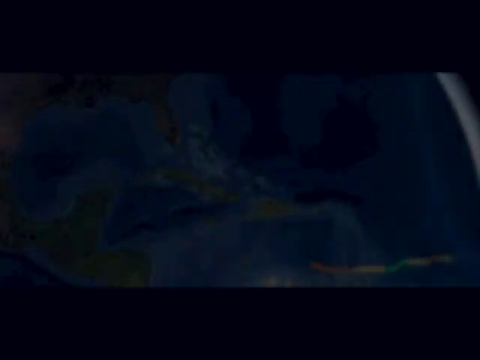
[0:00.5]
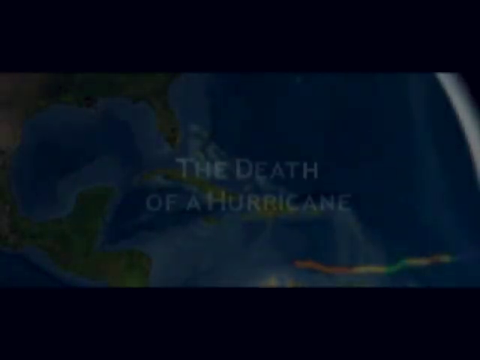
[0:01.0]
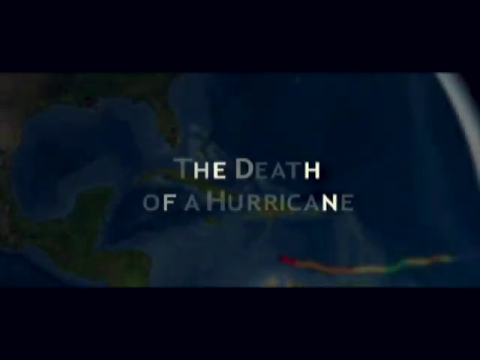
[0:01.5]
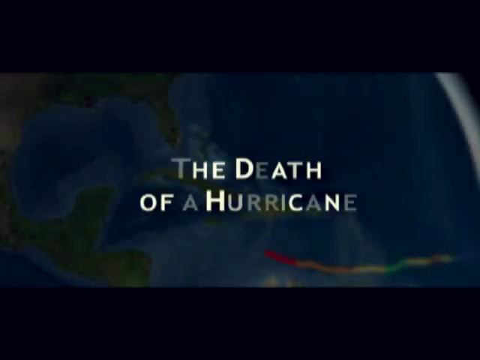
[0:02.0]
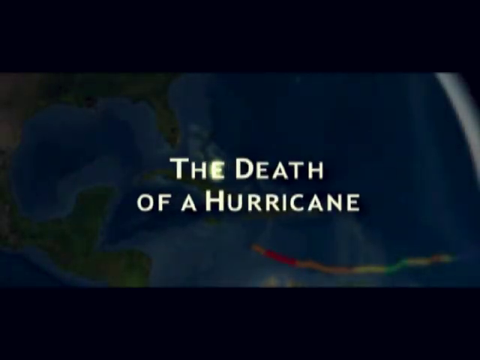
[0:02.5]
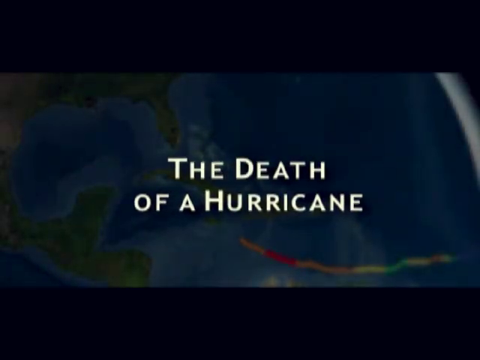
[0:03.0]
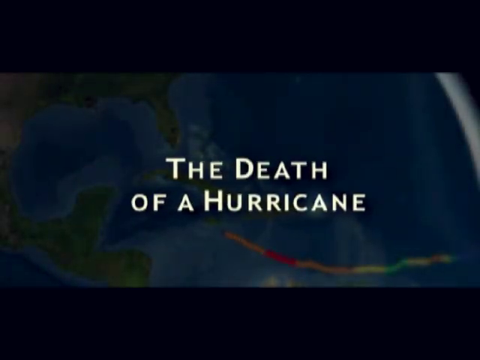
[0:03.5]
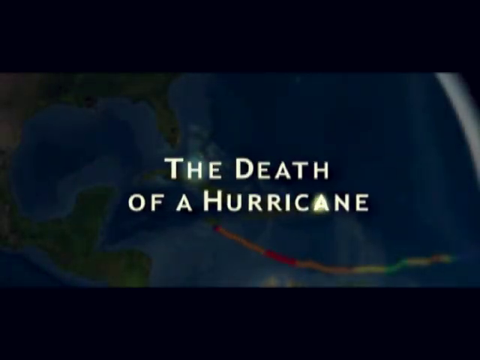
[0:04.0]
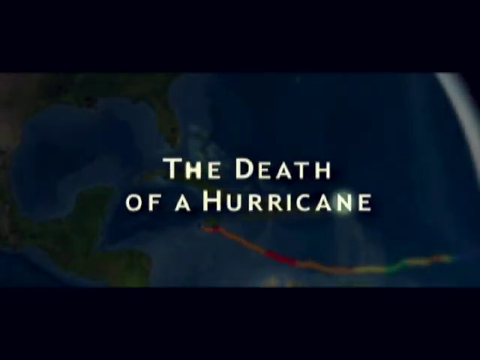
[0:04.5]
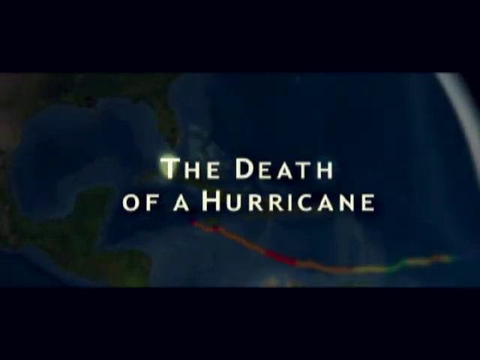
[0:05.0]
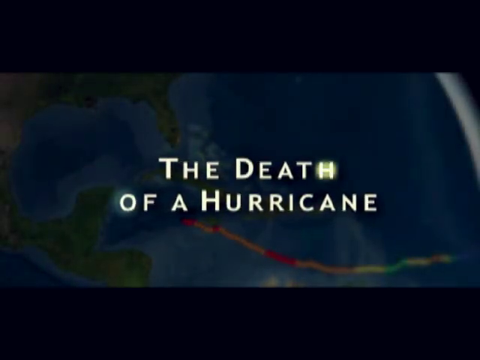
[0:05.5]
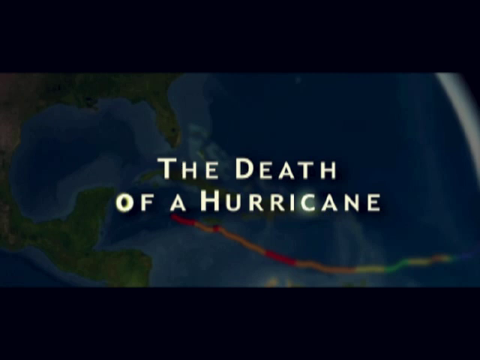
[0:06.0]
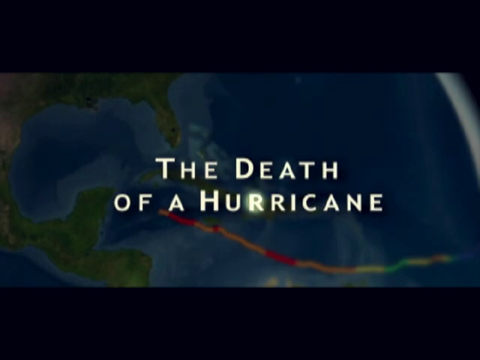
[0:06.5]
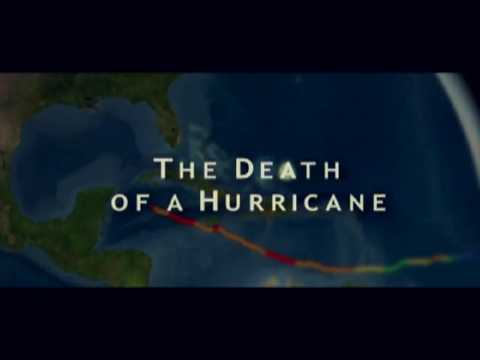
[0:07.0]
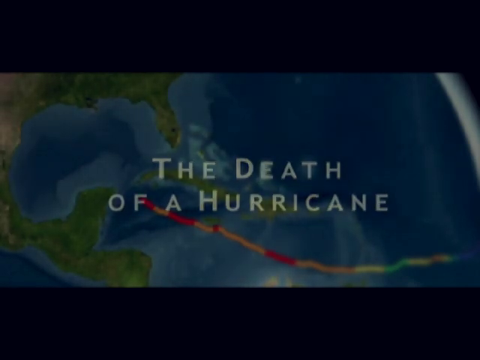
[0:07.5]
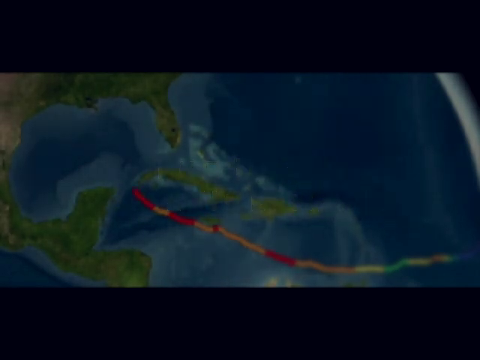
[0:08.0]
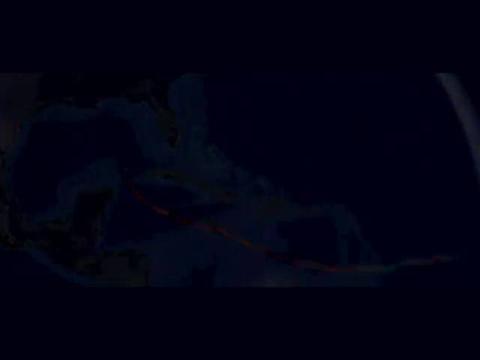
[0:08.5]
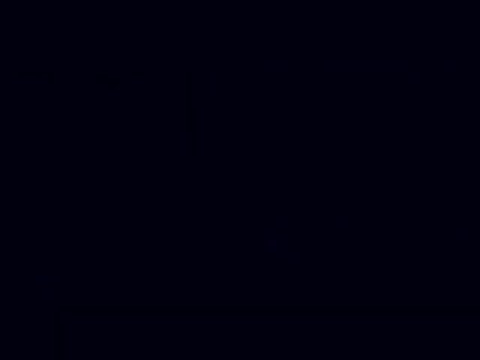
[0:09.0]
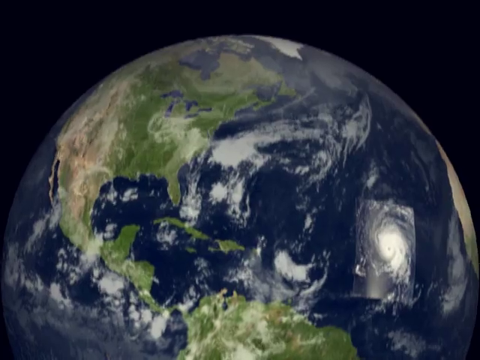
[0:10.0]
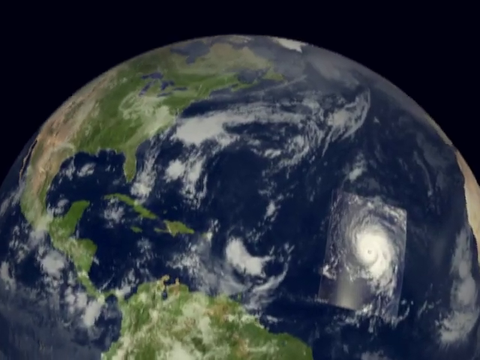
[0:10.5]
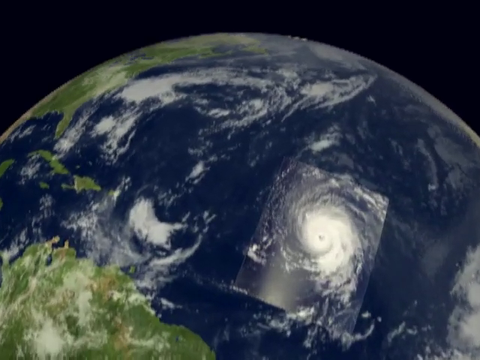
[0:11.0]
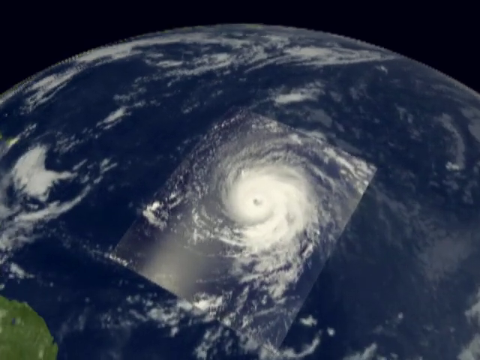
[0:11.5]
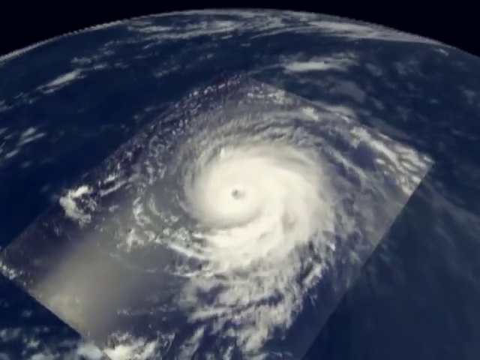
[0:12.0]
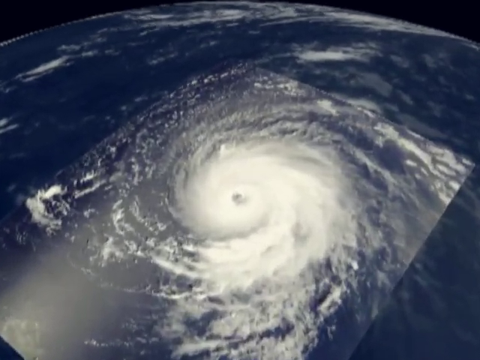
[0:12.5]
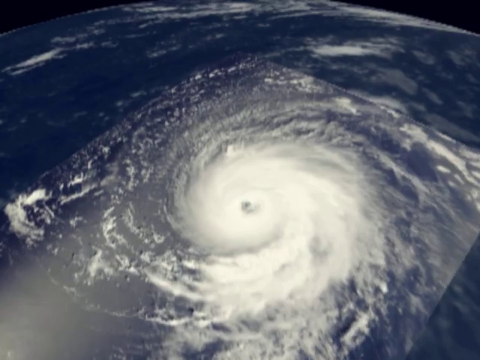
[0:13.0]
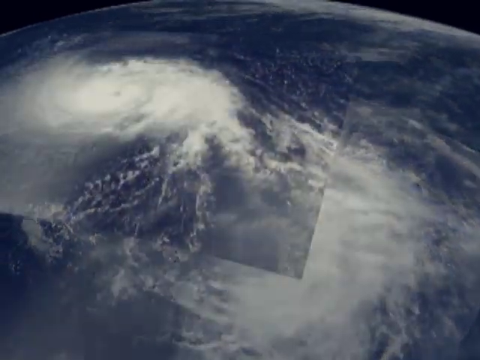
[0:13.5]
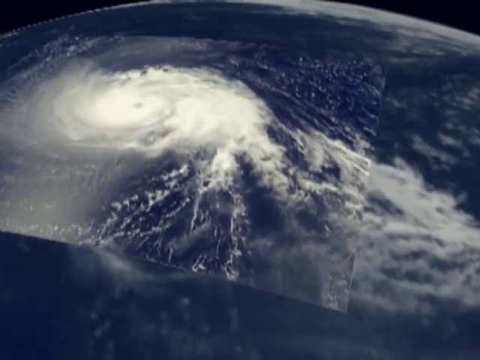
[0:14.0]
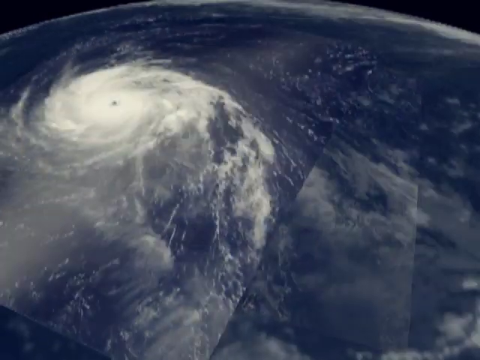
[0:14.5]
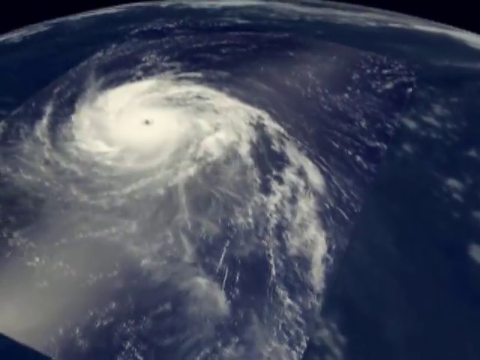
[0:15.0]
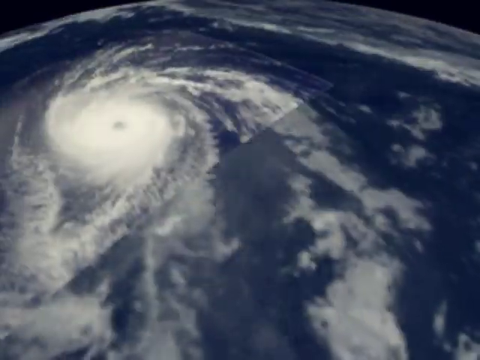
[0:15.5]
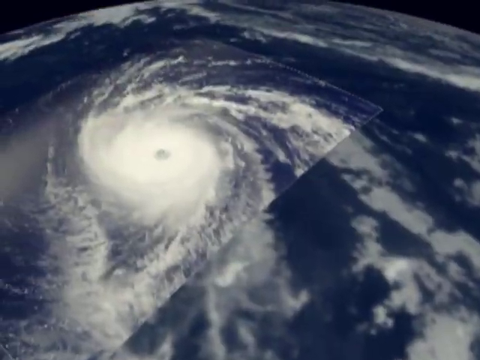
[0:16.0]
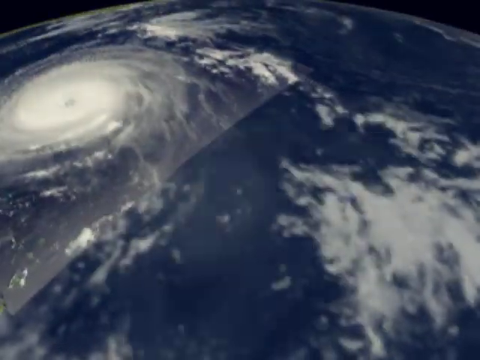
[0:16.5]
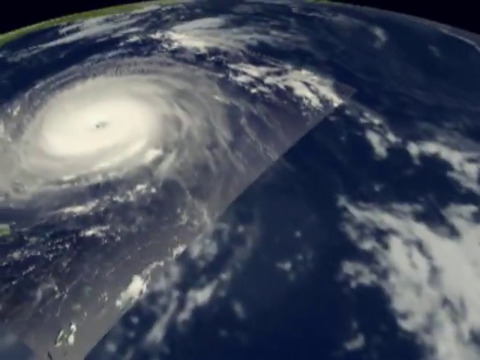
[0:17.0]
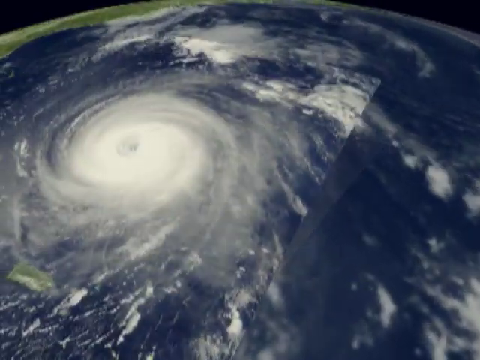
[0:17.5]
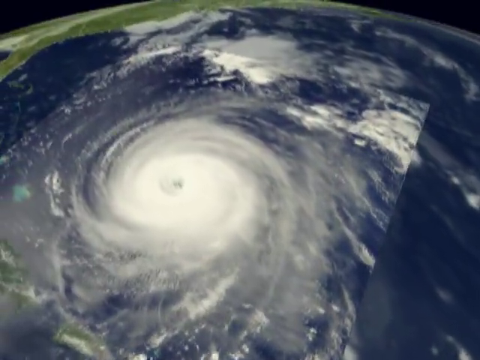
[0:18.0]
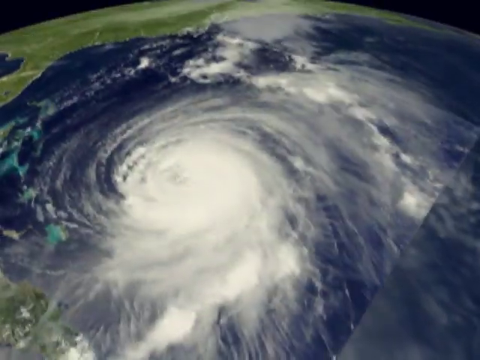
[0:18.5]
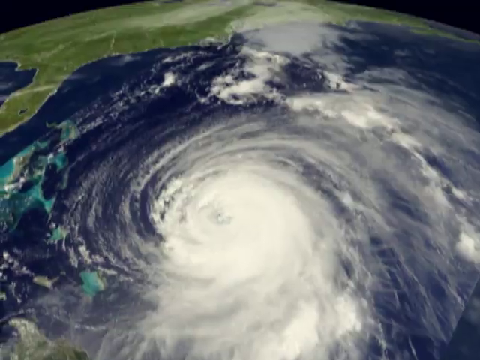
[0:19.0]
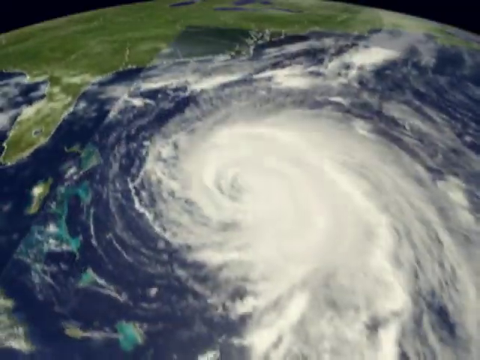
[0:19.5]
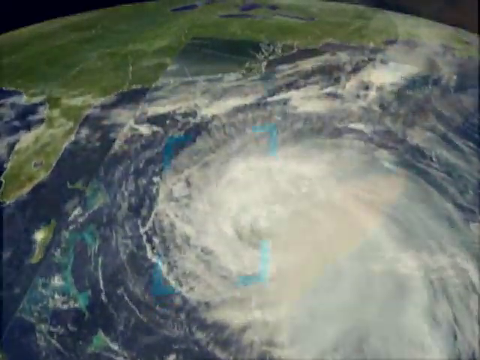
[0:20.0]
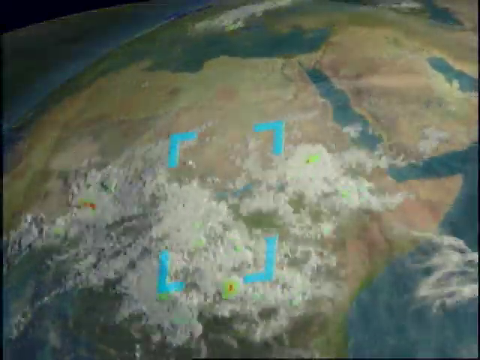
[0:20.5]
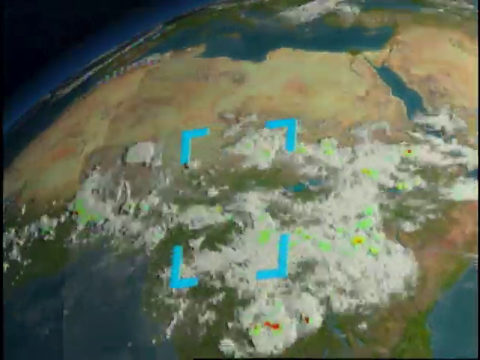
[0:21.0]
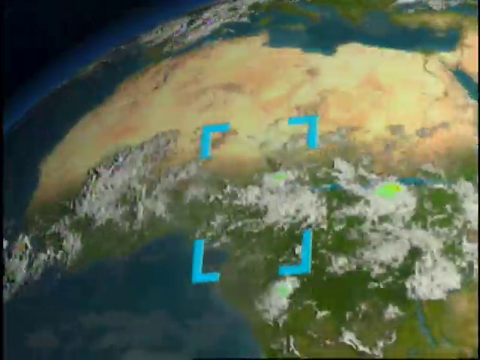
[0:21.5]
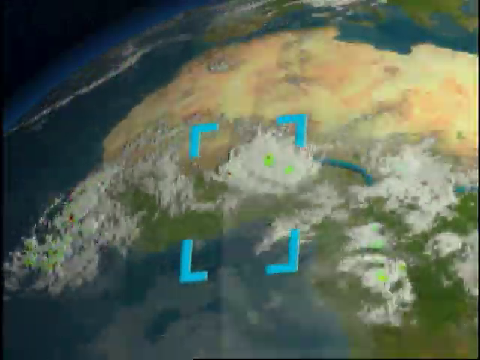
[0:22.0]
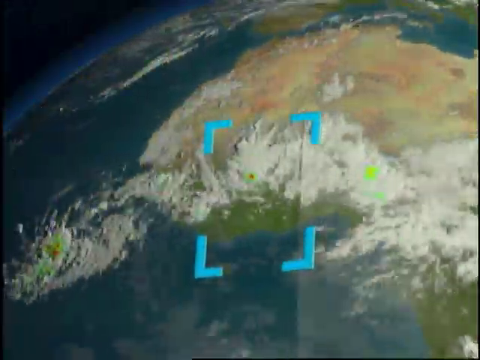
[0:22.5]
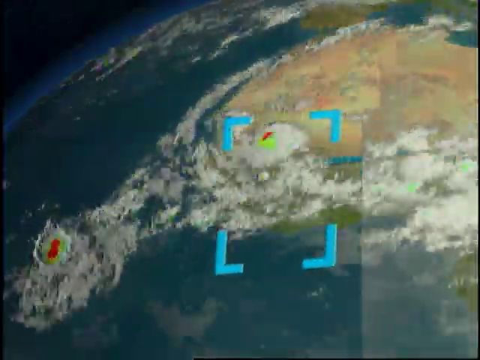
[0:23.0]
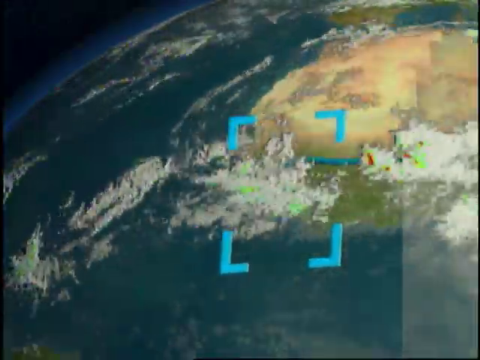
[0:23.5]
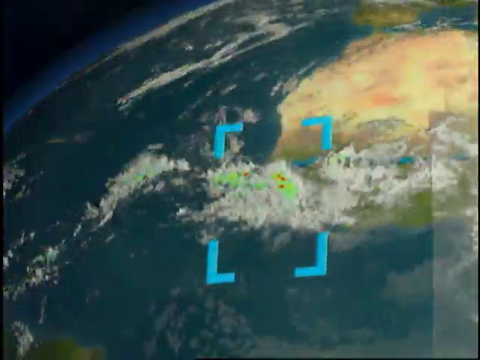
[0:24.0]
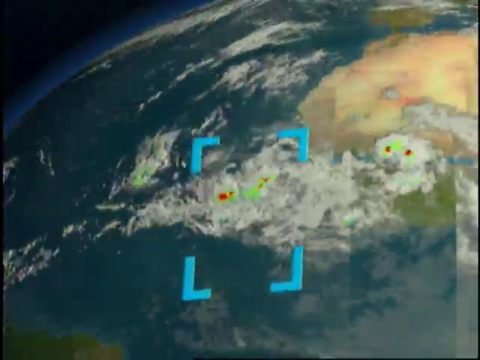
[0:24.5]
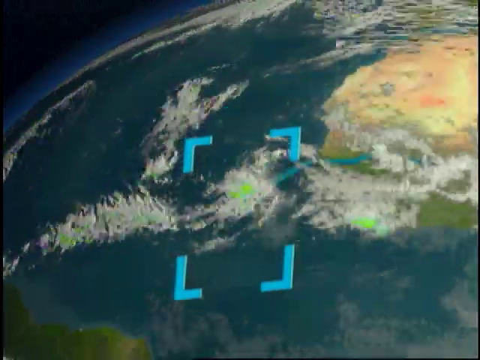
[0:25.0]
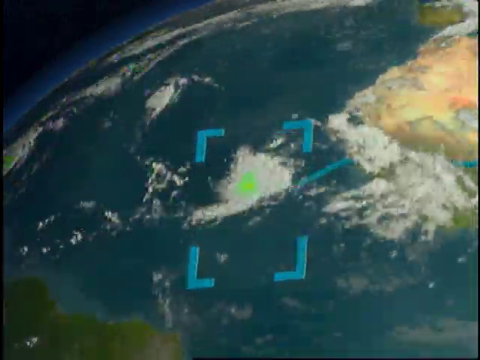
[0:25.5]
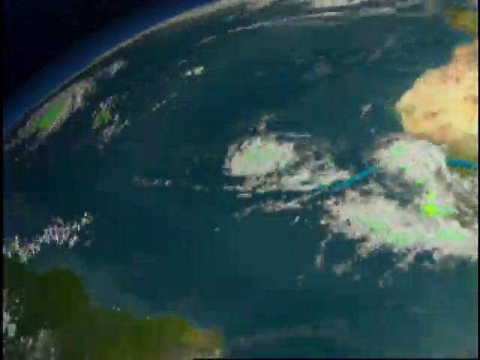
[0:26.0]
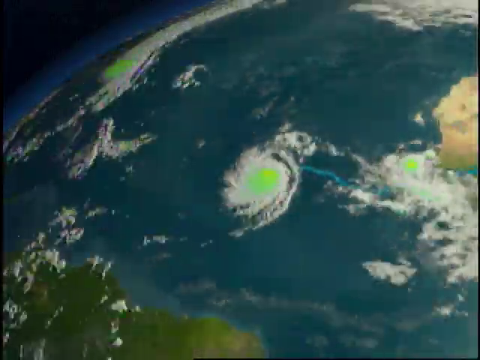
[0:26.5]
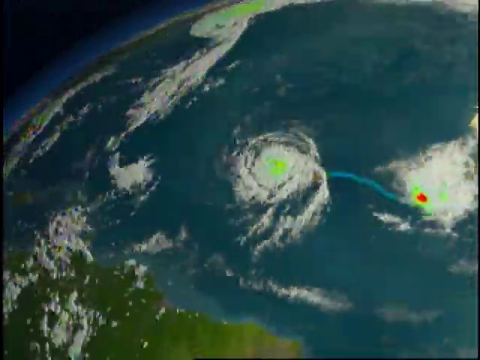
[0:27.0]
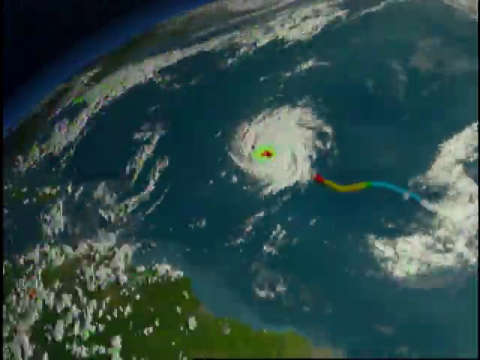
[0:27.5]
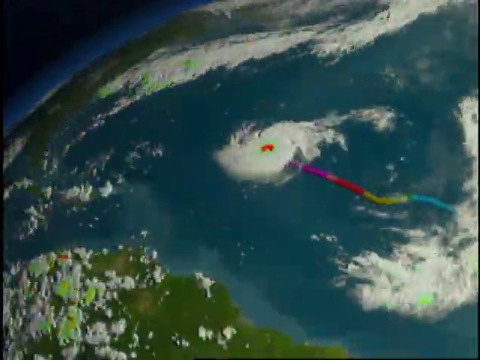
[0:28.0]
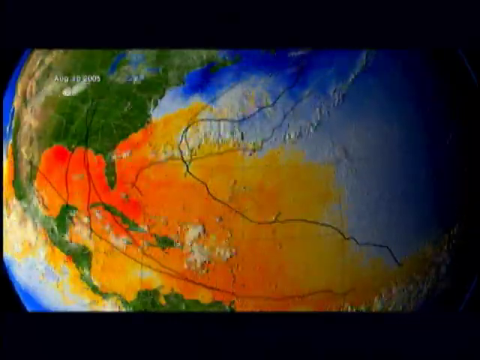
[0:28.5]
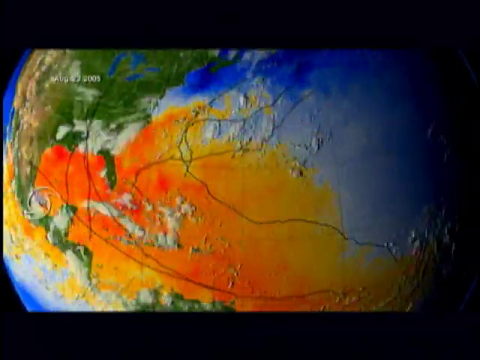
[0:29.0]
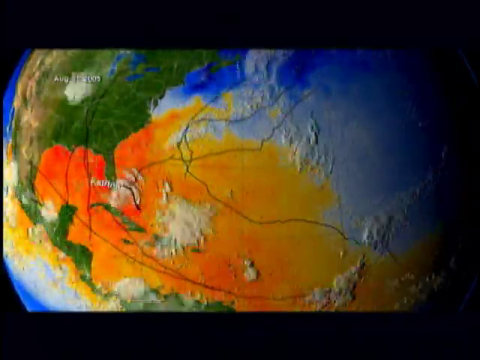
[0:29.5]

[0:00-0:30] A black screen fades to a rectangle in the center of the screen showing a picture of the Earth, with North America, Mexico and Central America visible on the left part of the image and blue water in the center. A line comes from the right of the screen up towards Florida; it is green, yellow, orange, yellow, green, yellow, red, orange, red, orange and red, and it moves up, showing the path of the hurricane. Next comes a computer-generated 3D image of the world. It zooms in and shows a moving hurricane, just the clouds, seen as if from space looking down. Africa is shown, along with how the hurricane forms; it looks like a model of something seen on a weather channel. Then an image of the Atlantic Ocean off of America appears.